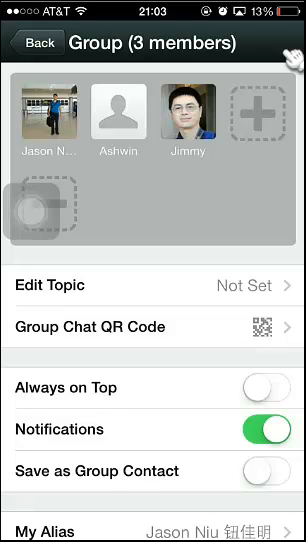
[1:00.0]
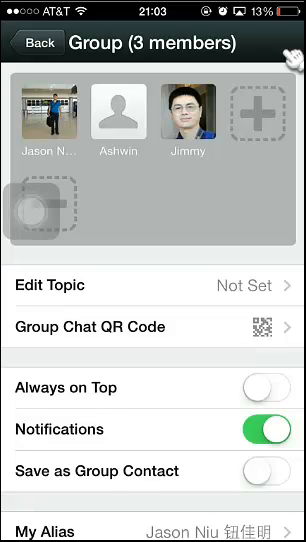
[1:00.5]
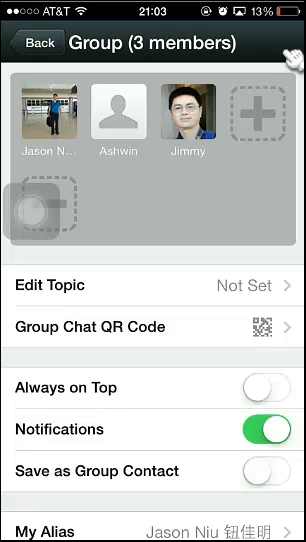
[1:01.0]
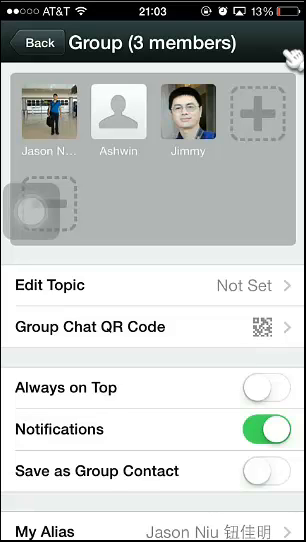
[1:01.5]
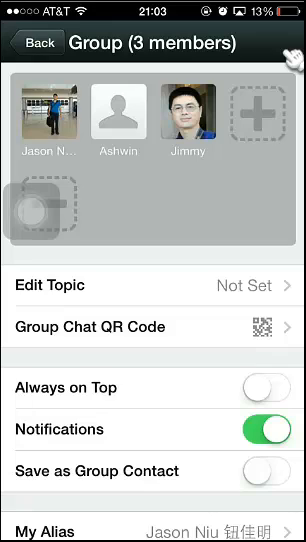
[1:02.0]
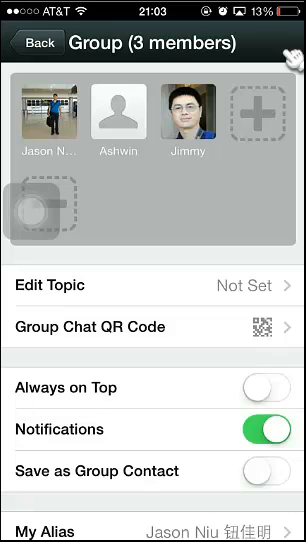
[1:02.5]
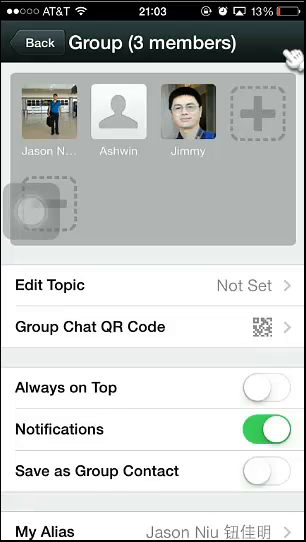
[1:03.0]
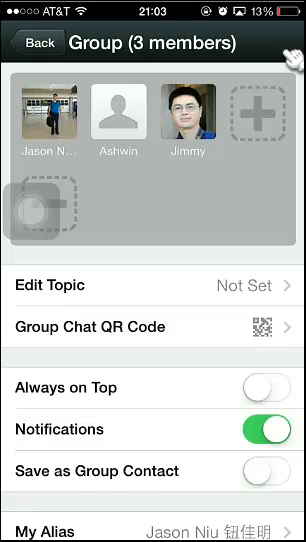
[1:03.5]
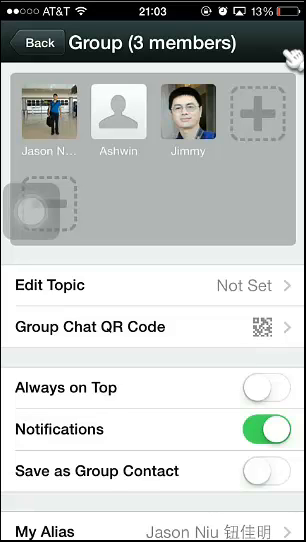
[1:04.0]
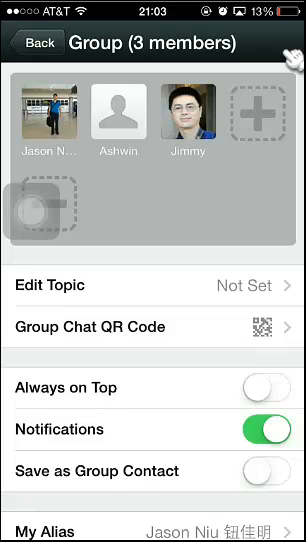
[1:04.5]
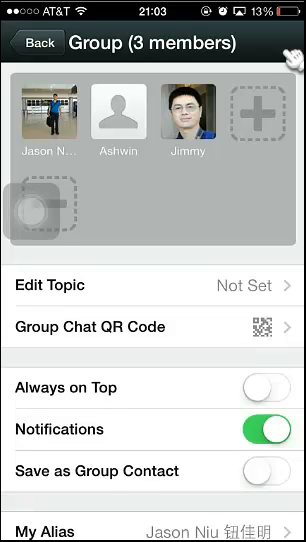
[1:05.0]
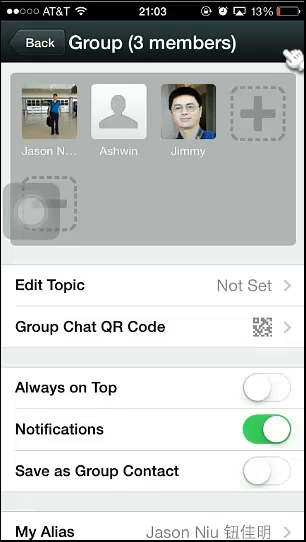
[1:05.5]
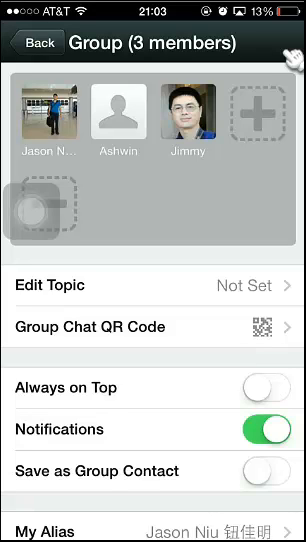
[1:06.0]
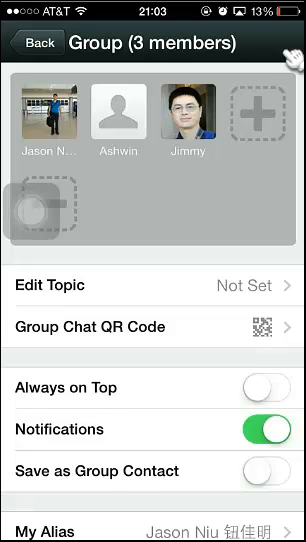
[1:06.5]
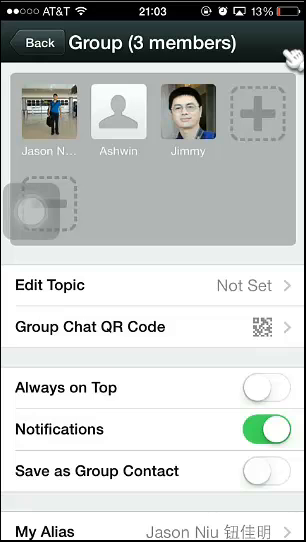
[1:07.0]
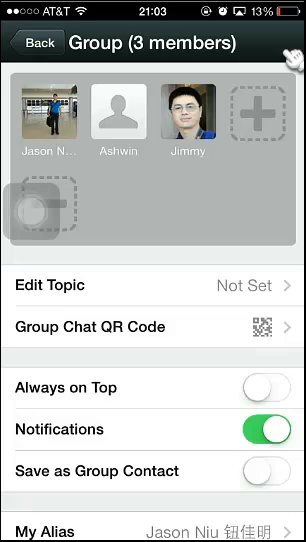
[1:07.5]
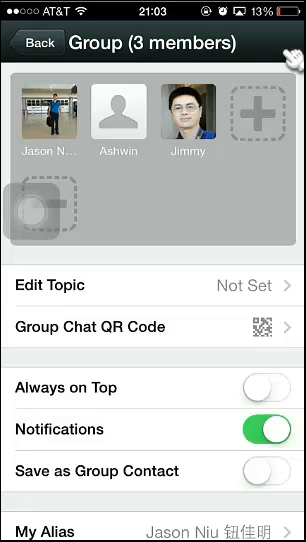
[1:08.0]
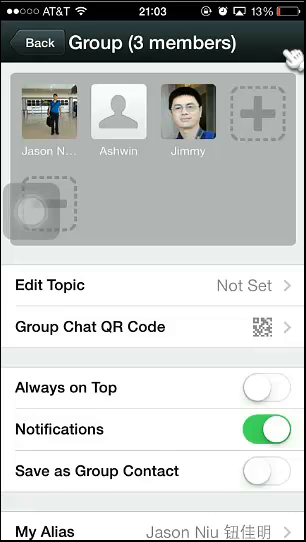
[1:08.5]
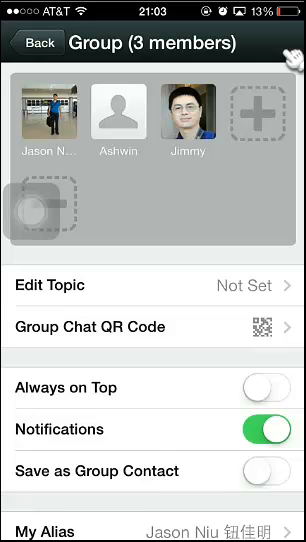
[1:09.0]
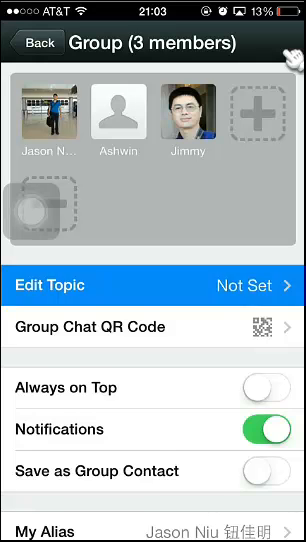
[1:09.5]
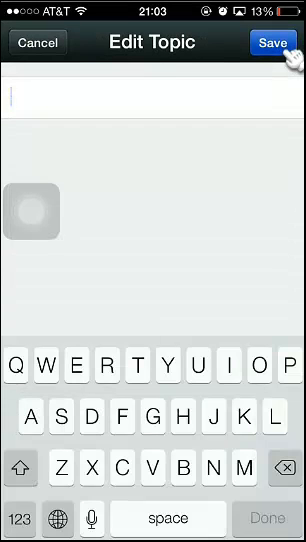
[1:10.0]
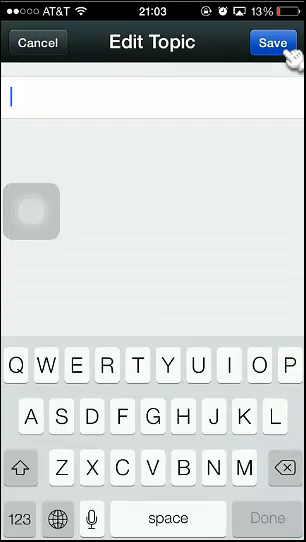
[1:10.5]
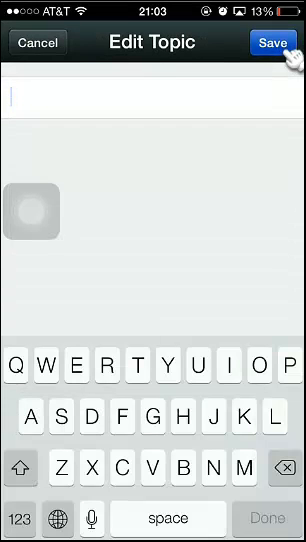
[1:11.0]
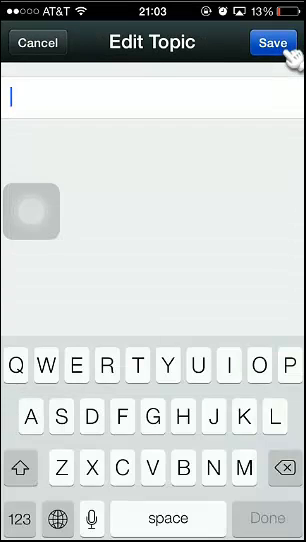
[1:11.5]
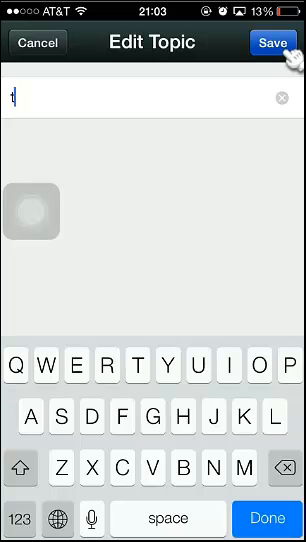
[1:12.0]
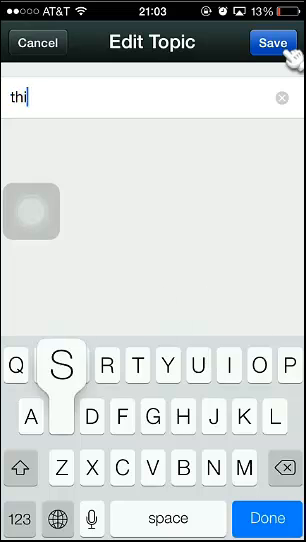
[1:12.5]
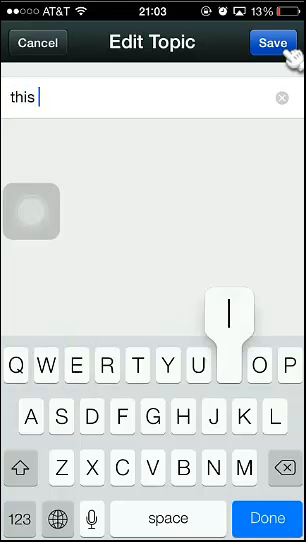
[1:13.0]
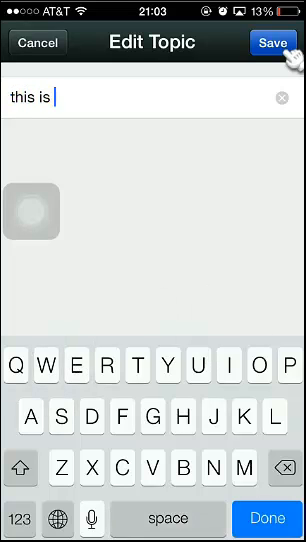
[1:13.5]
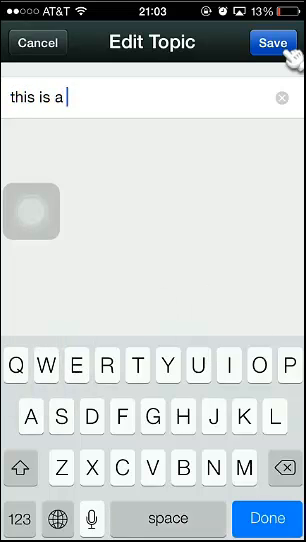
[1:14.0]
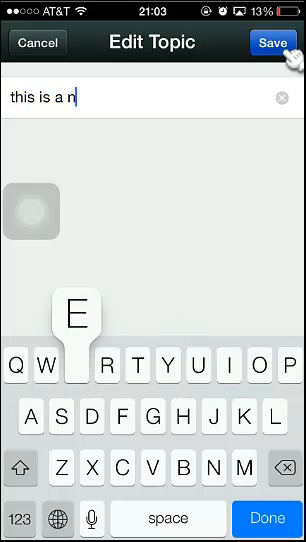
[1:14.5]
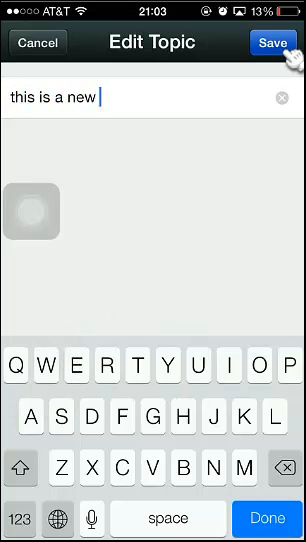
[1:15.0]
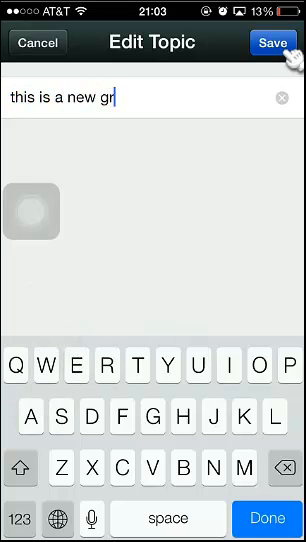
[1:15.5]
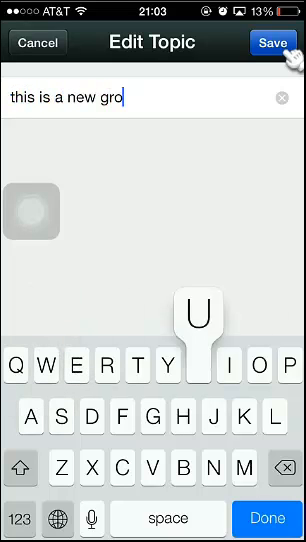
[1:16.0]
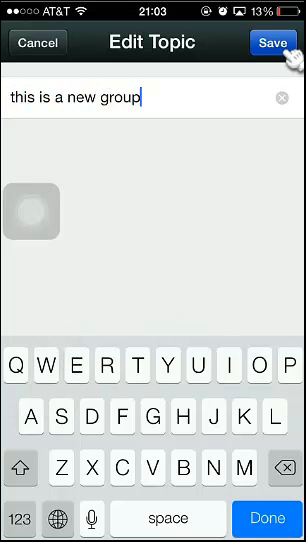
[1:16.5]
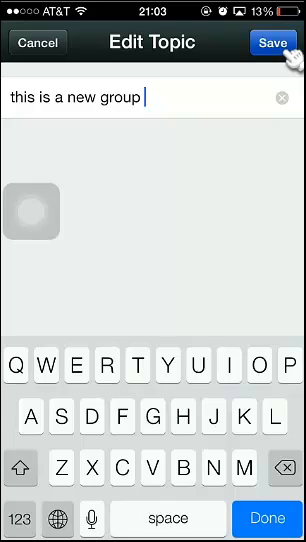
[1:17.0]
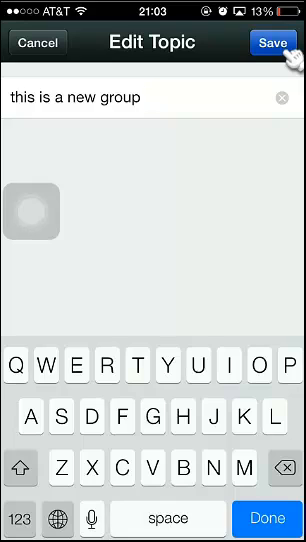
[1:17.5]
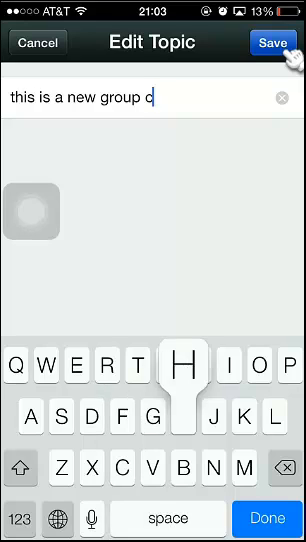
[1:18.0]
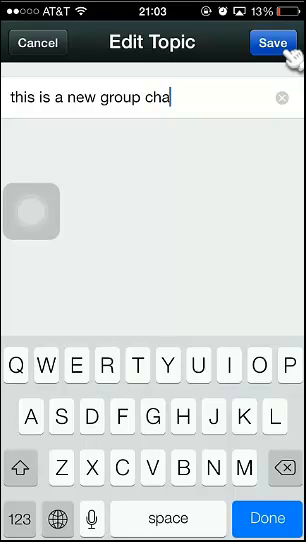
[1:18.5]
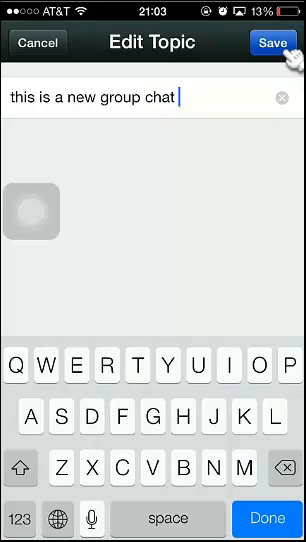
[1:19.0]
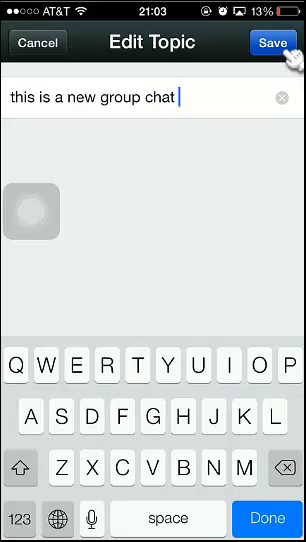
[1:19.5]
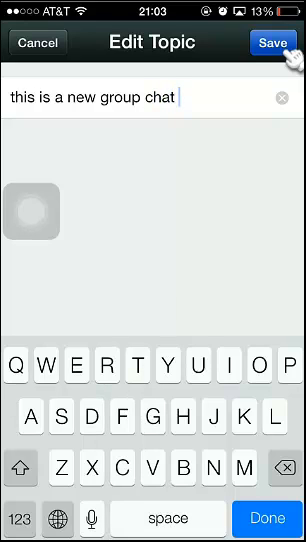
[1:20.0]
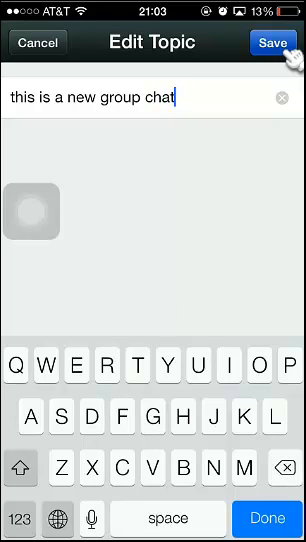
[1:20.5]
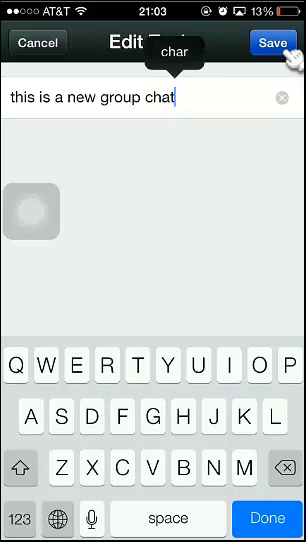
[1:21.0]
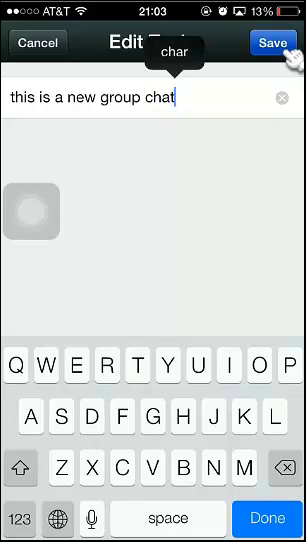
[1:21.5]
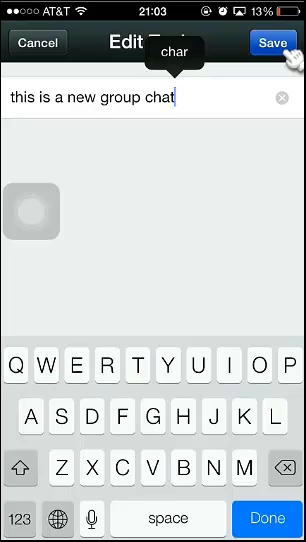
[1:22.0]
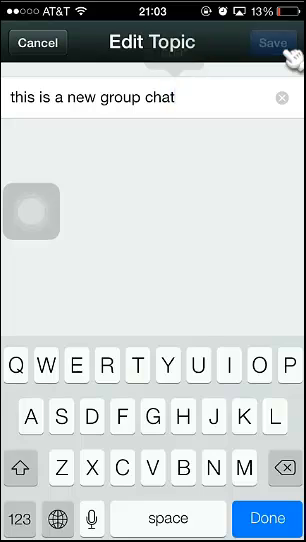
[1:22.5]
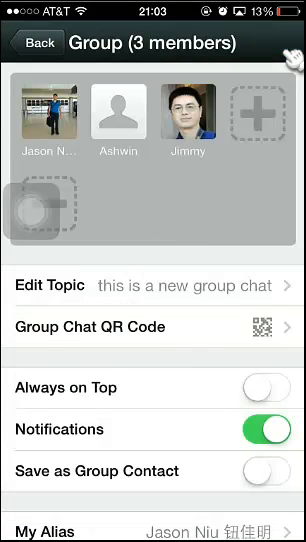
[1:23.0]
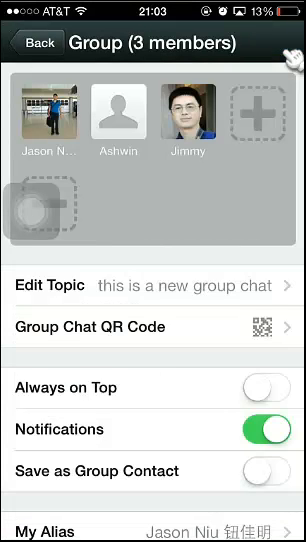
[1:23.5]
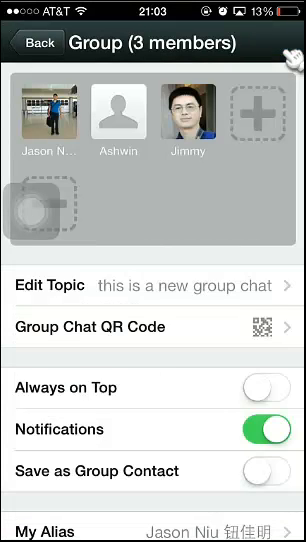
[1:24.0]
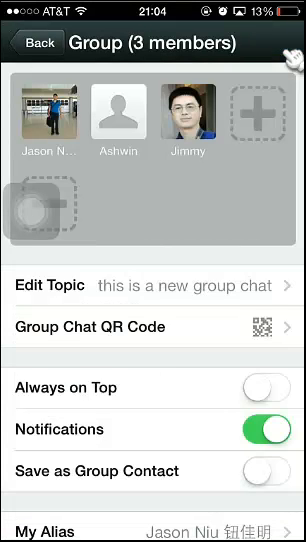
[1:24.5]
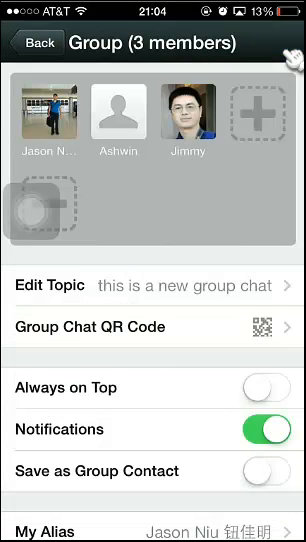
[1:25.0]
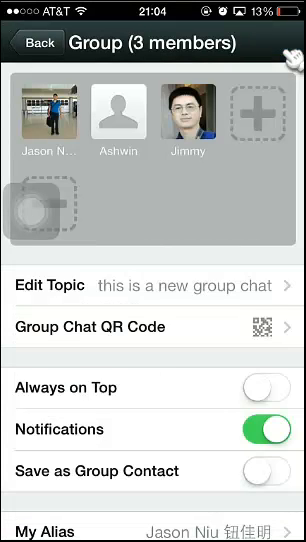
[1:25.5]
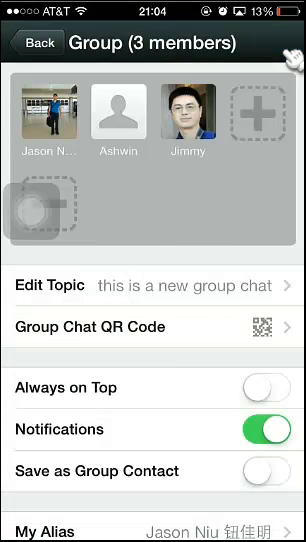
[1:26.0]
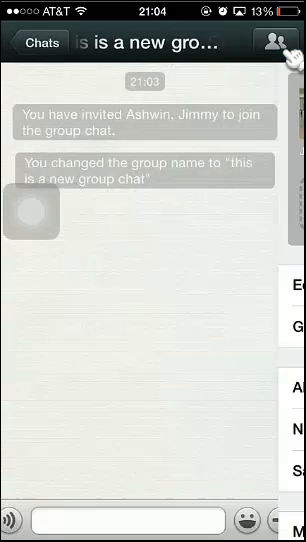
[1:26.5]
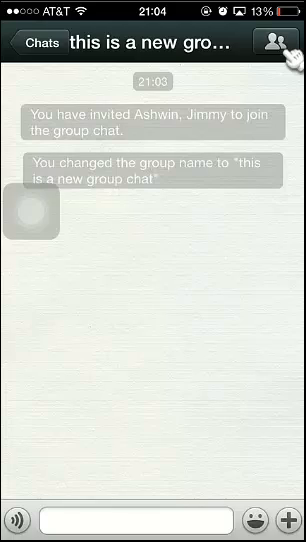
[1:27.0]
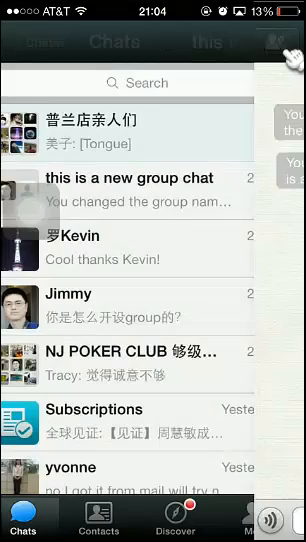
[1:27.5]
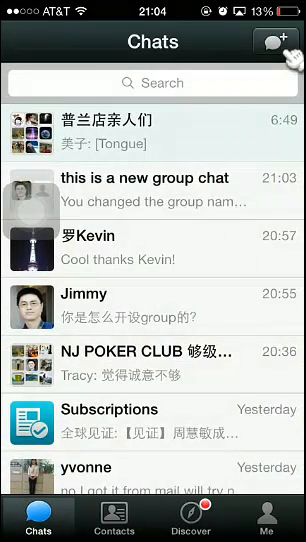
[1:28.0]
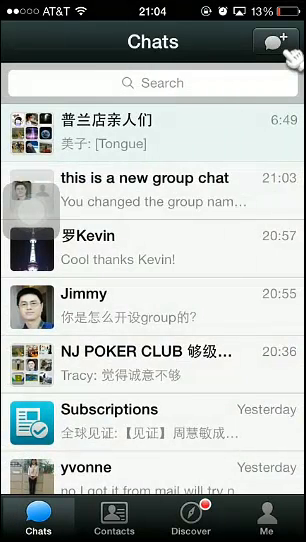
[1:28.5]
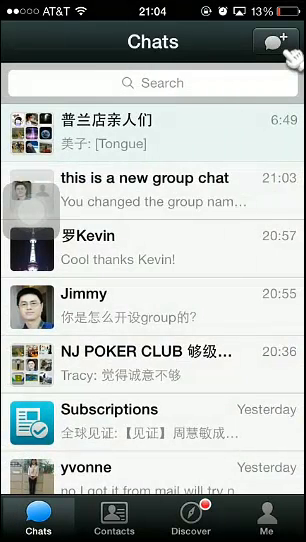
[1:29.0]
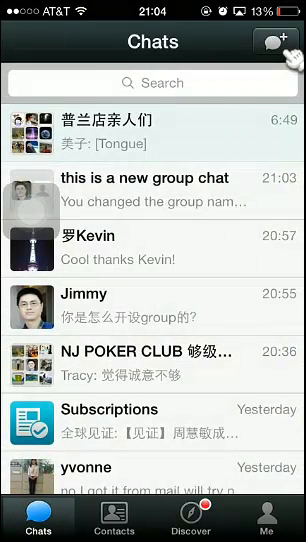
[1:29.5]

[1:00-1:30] Jason taps the edit topic button, enters "This is a new group chat" and presses the save button, setting the topic to "this is a new group chat". The group's home screen then shows text that says "You have invited Ashwin and Jimmy to join the group chat. You change the group name to "this is a new group cha"". The time is 21:04 in the evening. In the upper right corner of the group is a button with an icon of two people, apparently for accessing the group menu and seeing the members of the group chat; the menu has options such as always-on-top and show notifications, among others. The group name is then displayed at the top.